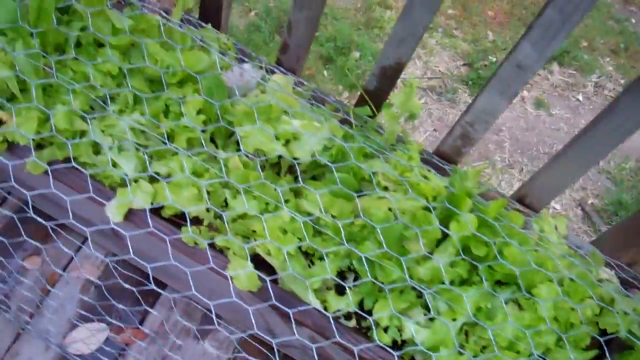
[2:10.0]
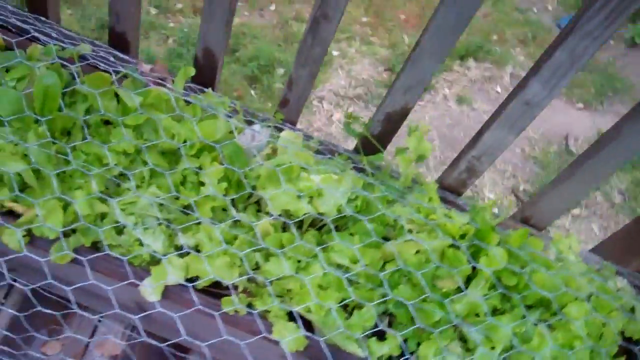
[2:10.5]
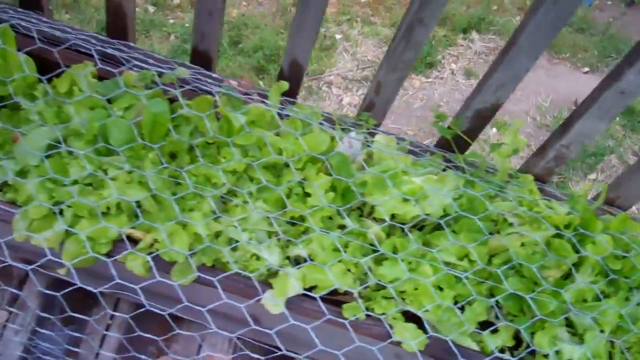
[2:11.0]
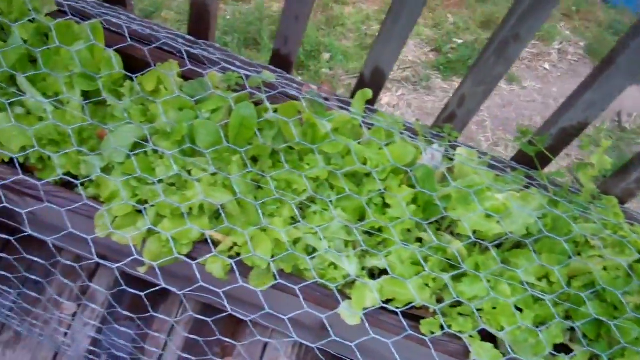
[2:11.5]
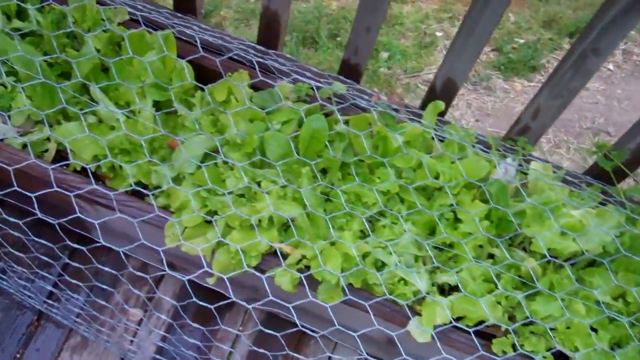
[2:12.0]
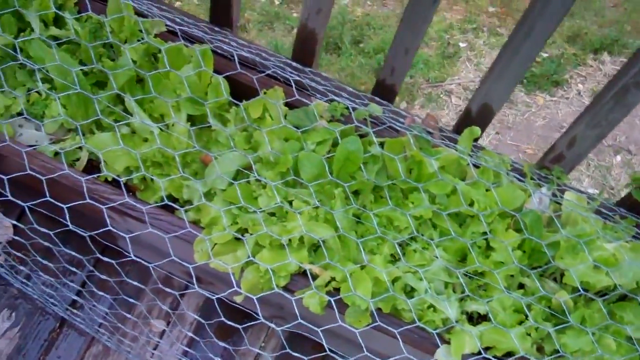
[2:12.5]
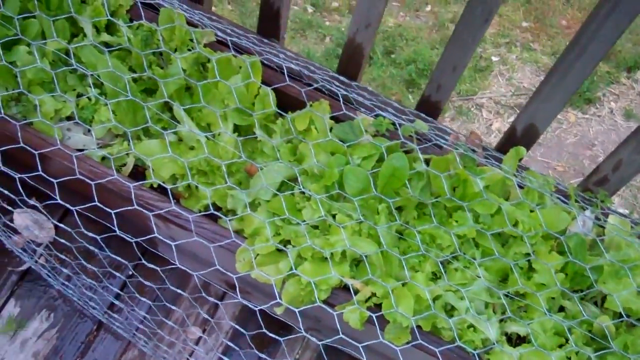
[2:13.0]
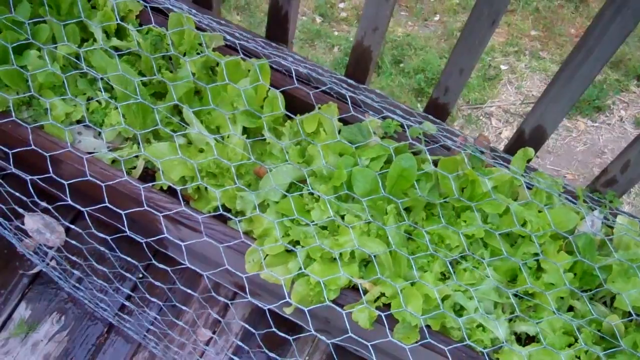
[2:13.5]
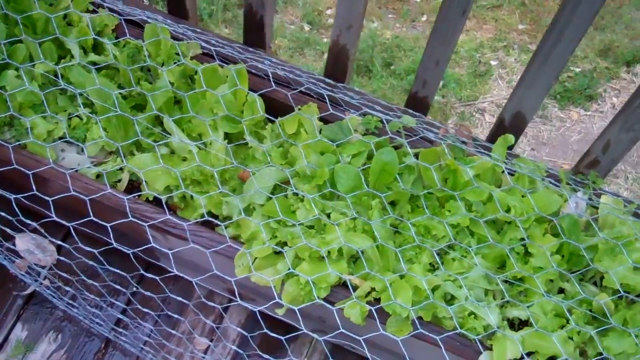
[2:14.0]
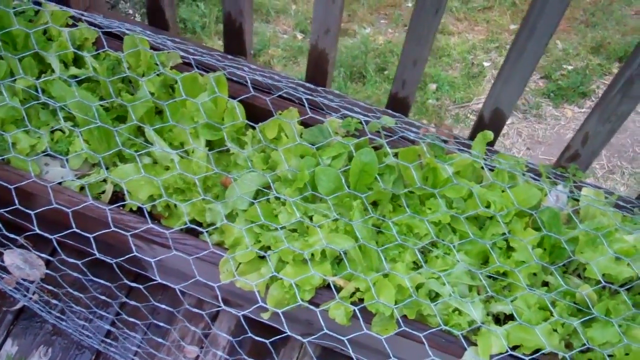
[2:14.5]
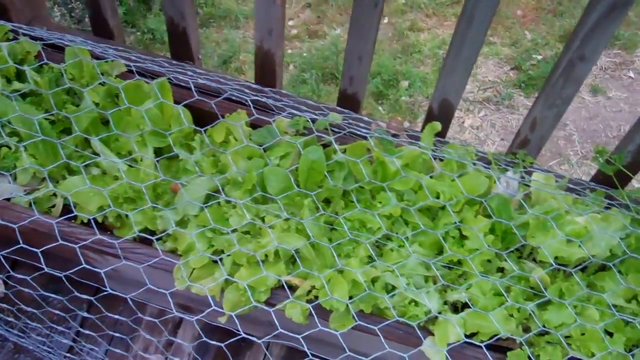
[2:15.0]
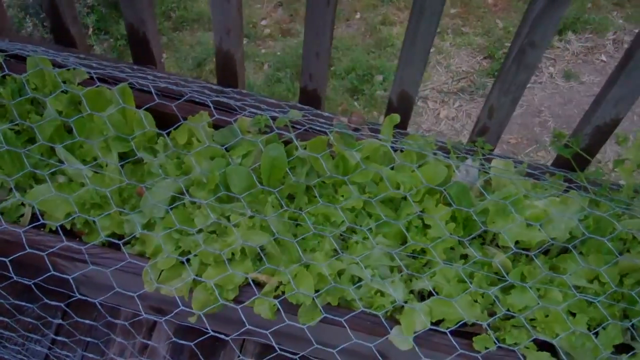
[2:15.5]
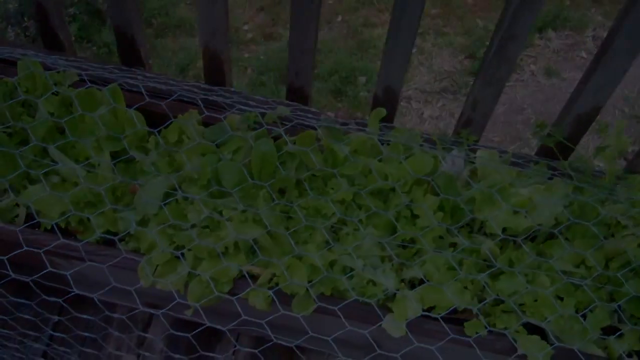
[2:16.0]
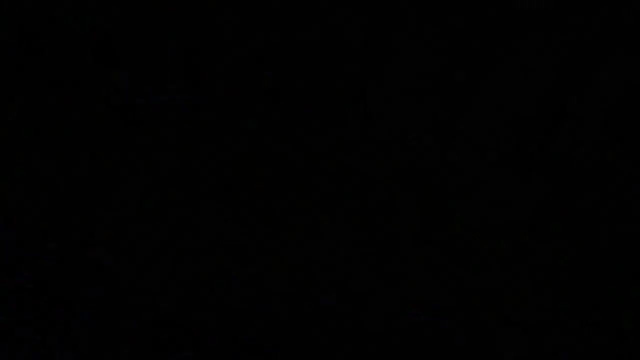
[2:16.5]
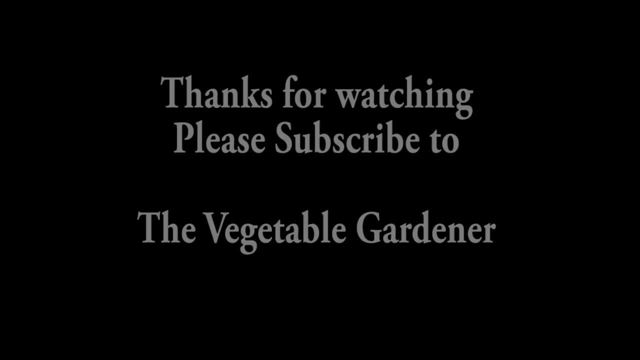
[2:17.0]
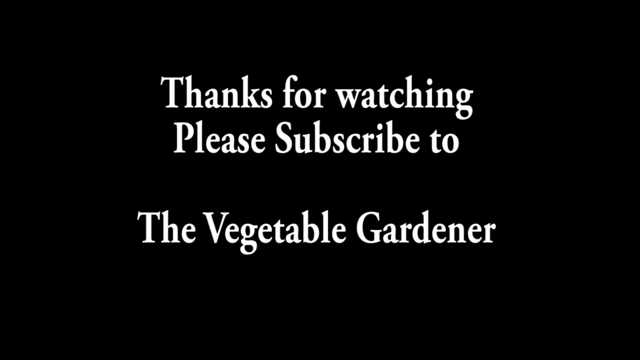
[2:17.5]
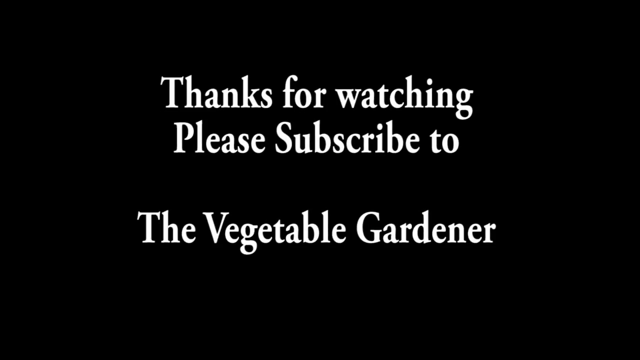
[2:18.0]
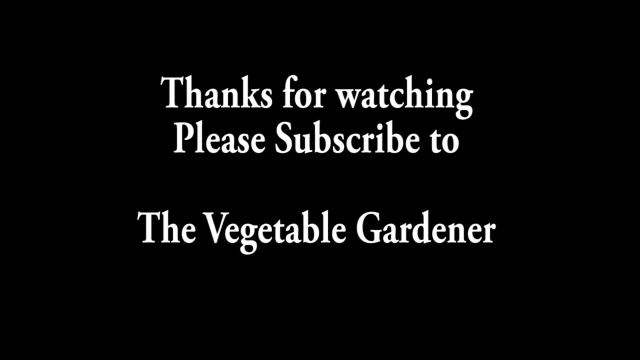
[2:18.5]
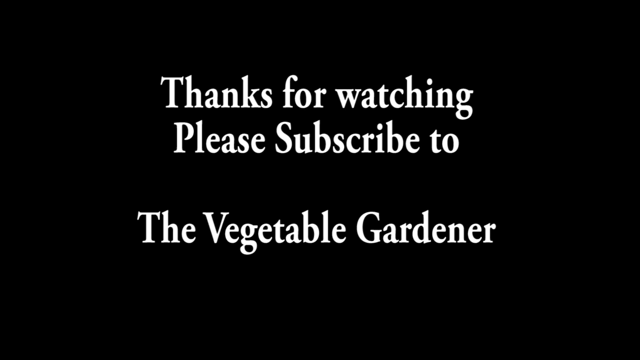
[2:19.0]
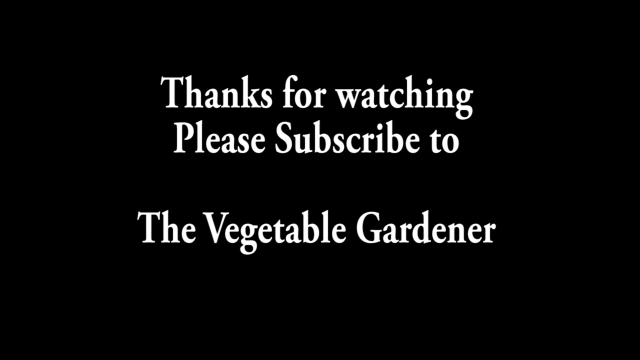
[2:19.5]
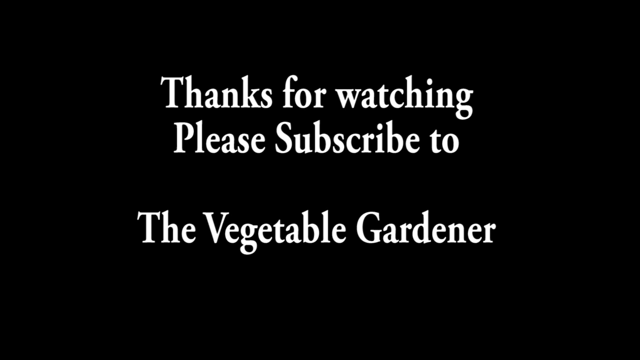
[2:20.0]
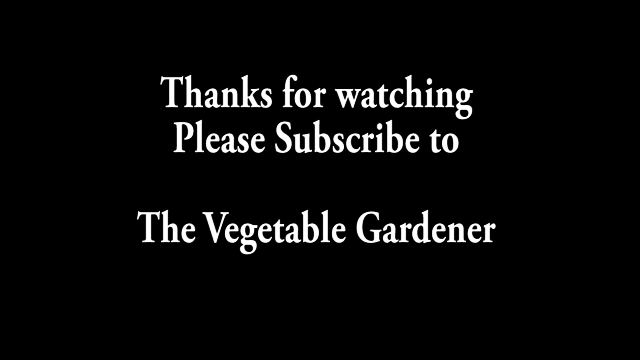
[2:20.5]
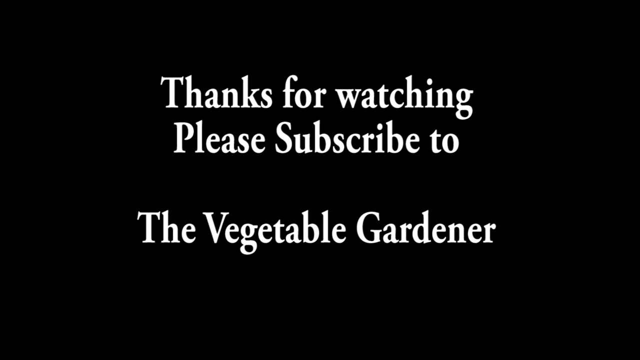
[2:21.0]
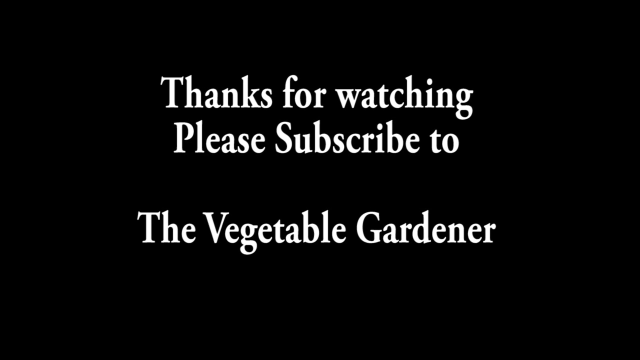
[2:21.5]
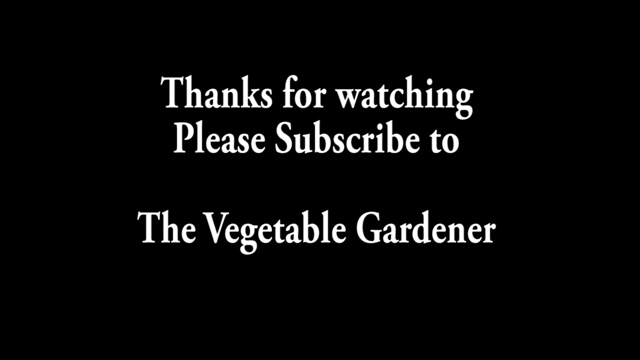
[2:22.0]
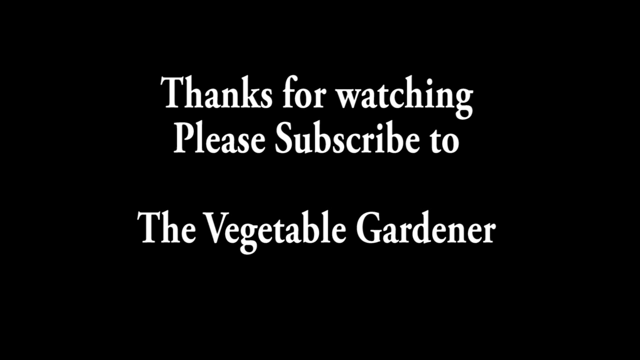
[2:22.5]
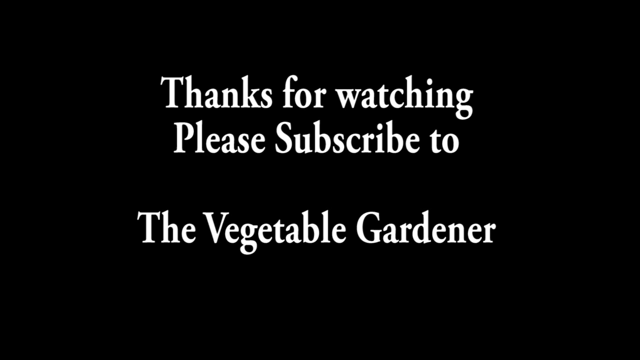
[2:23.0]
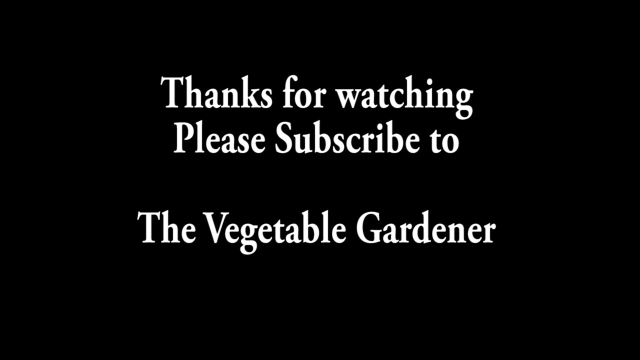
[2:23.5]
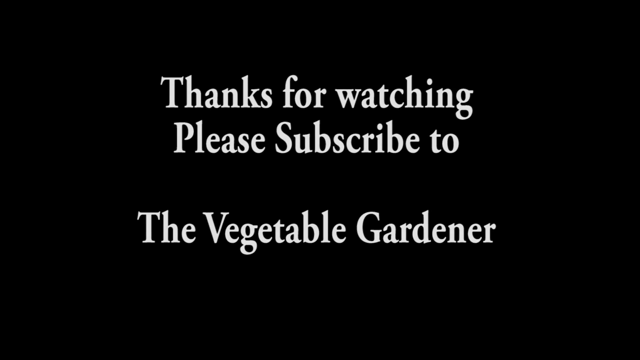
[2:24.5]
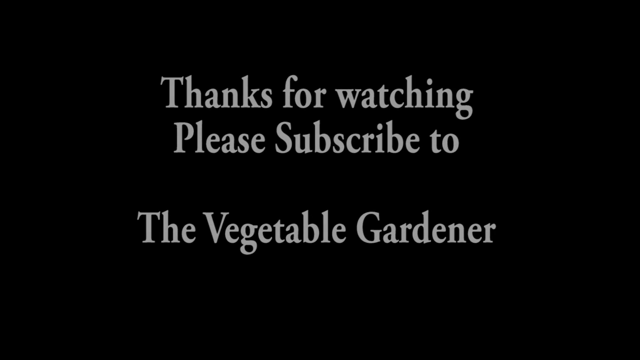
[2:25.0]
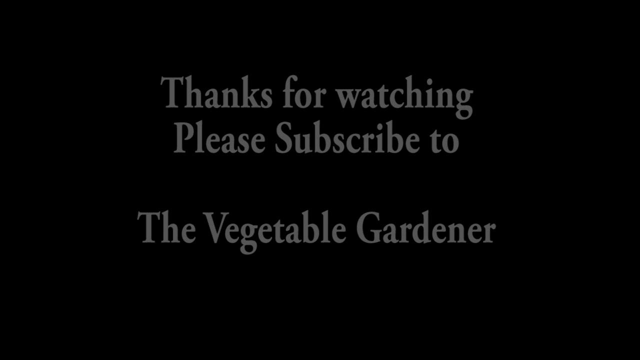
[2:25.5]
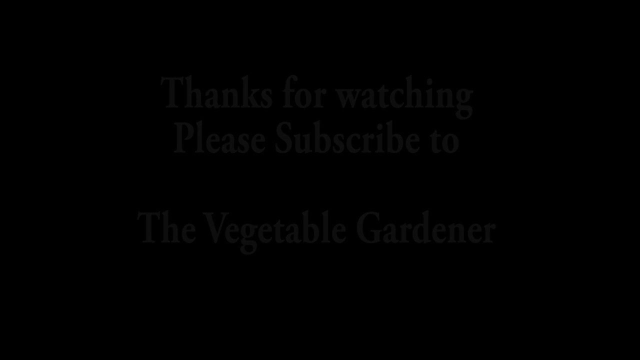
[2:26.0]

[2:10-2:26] The man continues to pan to the left of the plants in the wire mesh among the two planters. The video then fades to black, and white words appear: "thanks for watching, please subscribe to The Vegetable Gardener". The planters seem to be on a deck of some sort, at least one story above the ground judging by the angle, and they are against the deck railing. The railing seems sturdy and relatively new. In the bottom right, a small channel video button shows up.